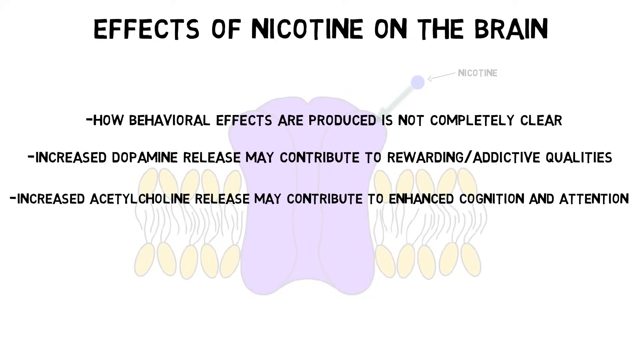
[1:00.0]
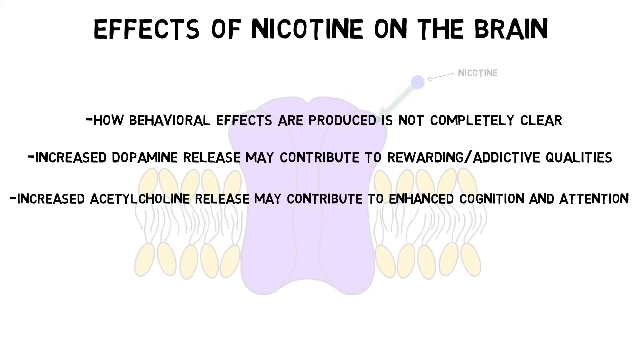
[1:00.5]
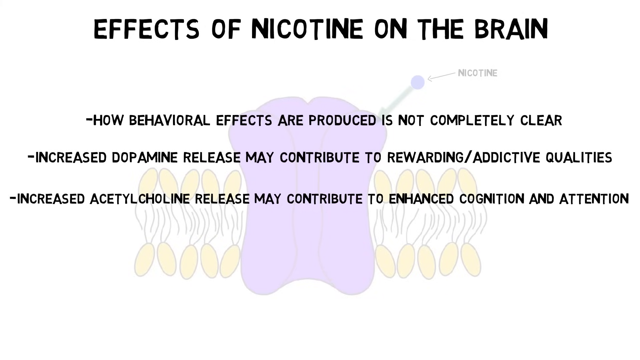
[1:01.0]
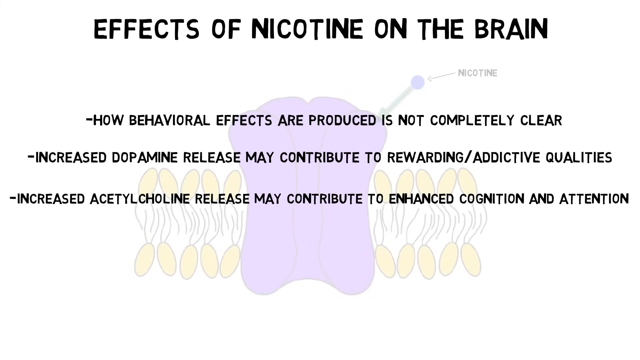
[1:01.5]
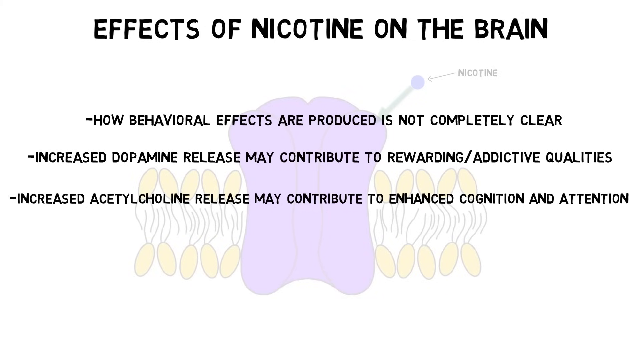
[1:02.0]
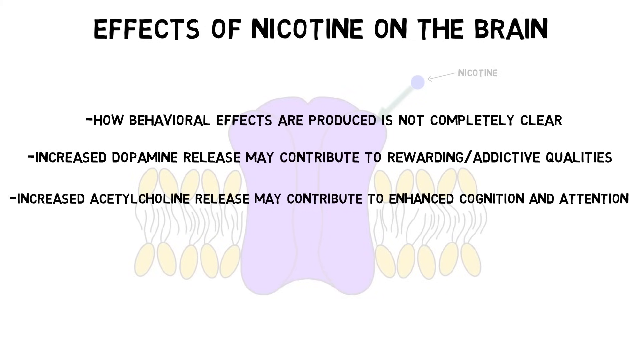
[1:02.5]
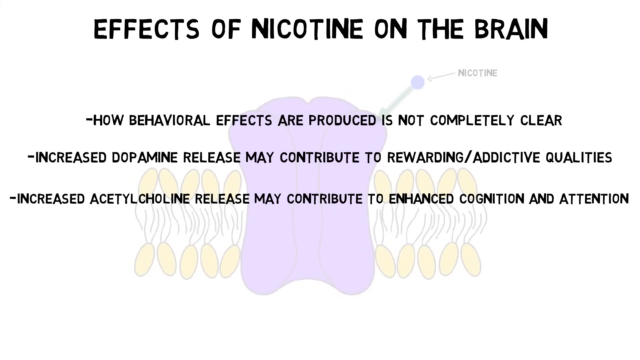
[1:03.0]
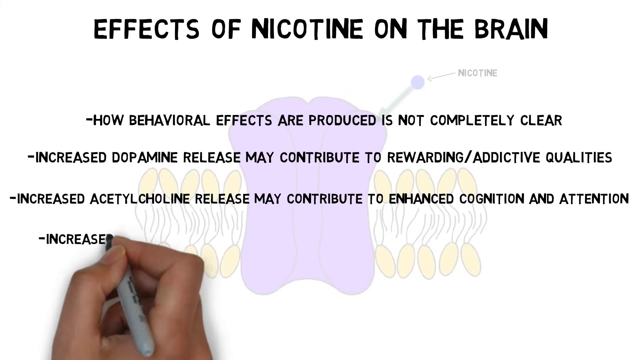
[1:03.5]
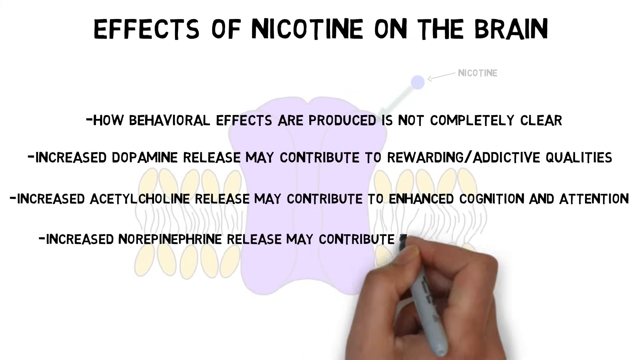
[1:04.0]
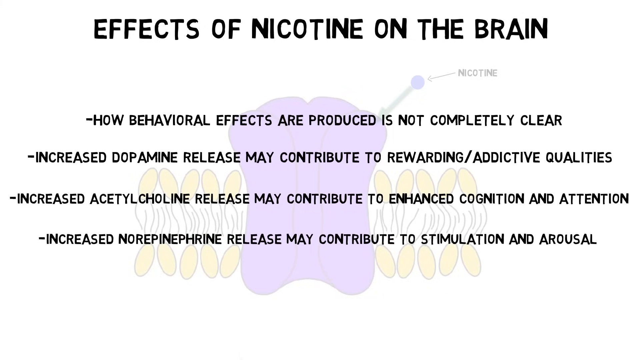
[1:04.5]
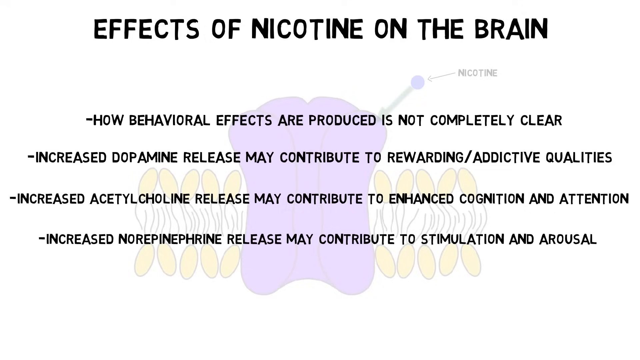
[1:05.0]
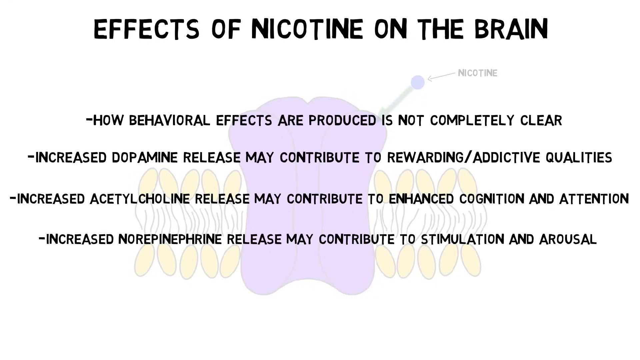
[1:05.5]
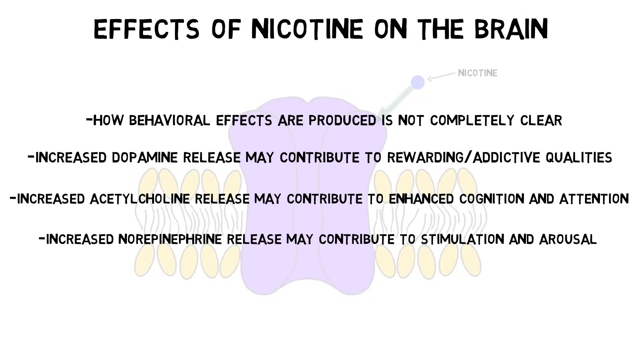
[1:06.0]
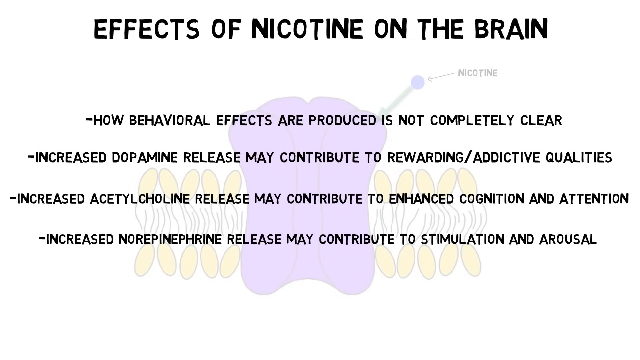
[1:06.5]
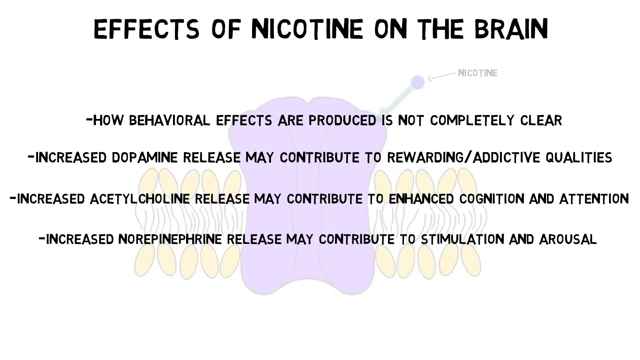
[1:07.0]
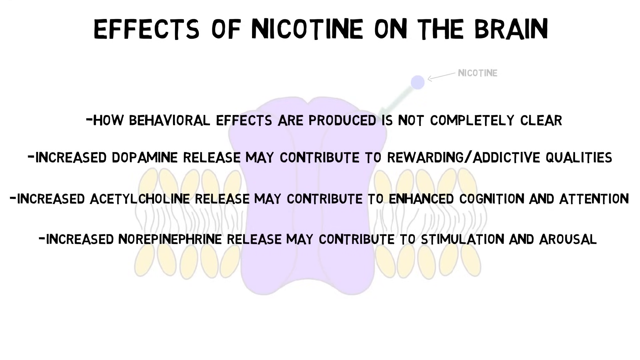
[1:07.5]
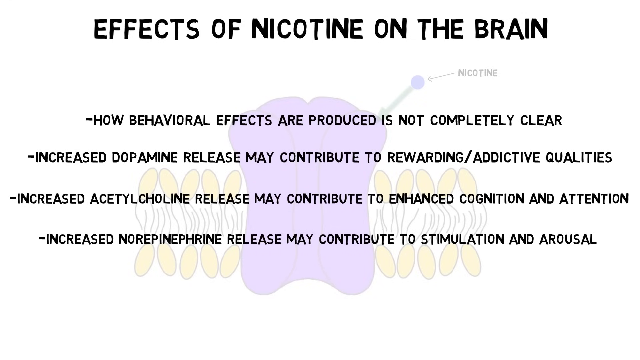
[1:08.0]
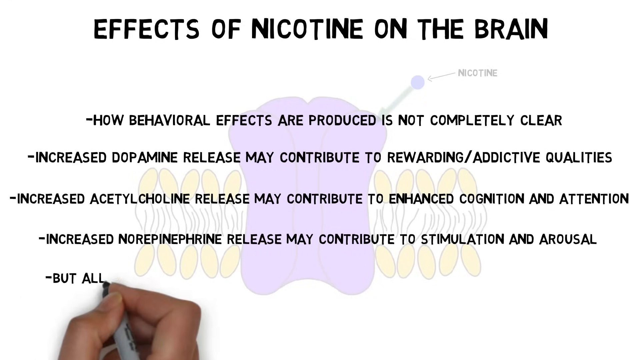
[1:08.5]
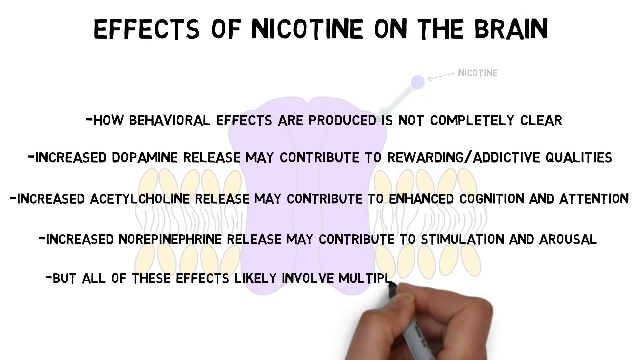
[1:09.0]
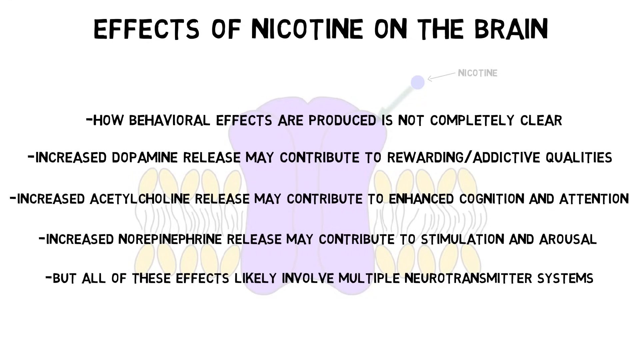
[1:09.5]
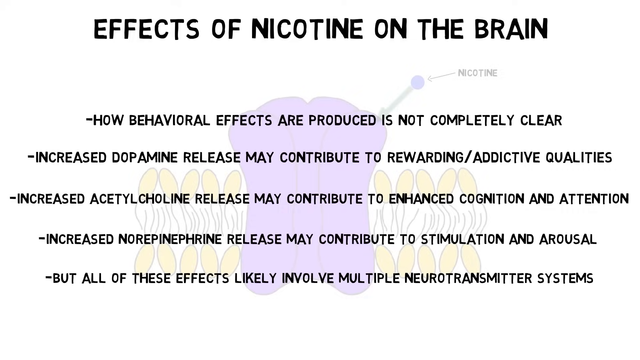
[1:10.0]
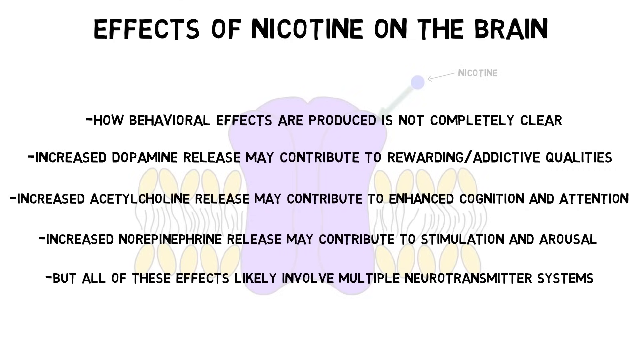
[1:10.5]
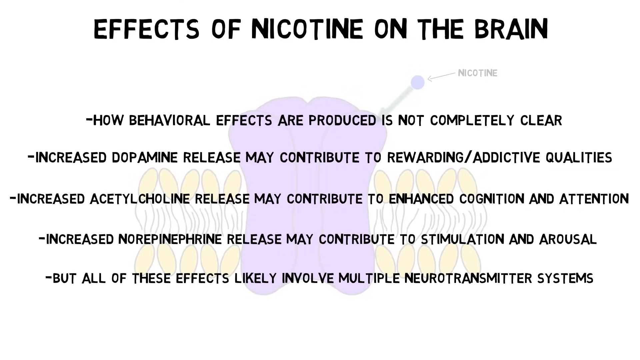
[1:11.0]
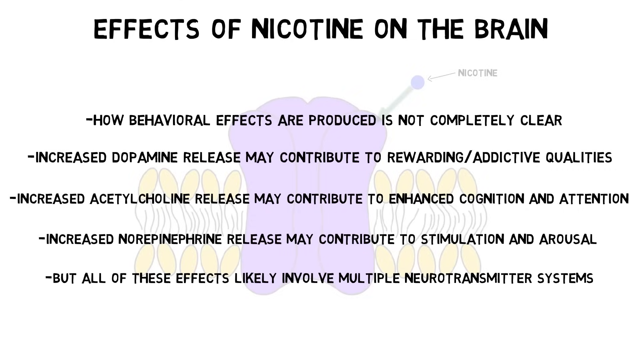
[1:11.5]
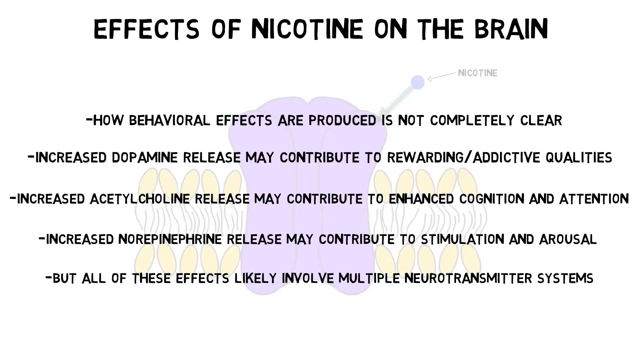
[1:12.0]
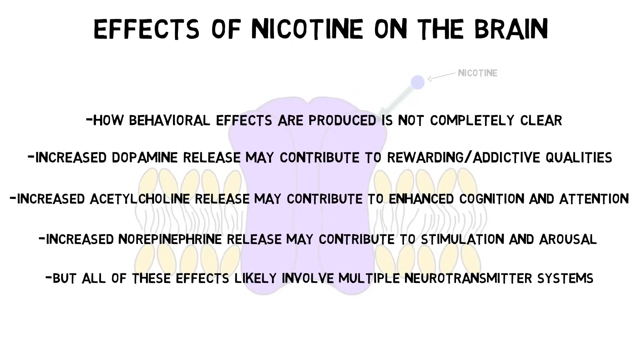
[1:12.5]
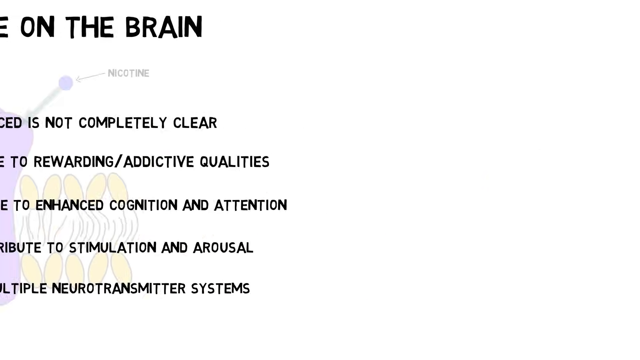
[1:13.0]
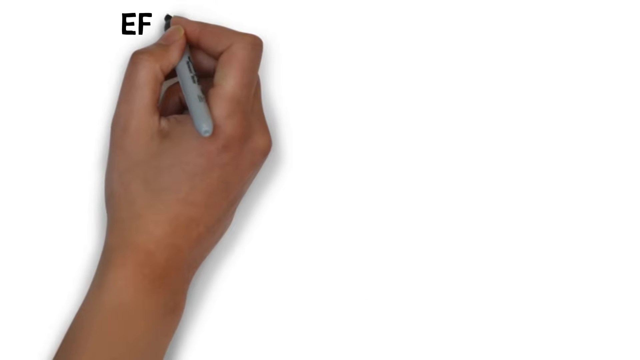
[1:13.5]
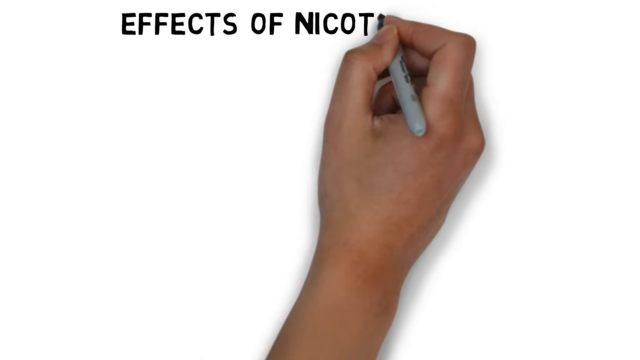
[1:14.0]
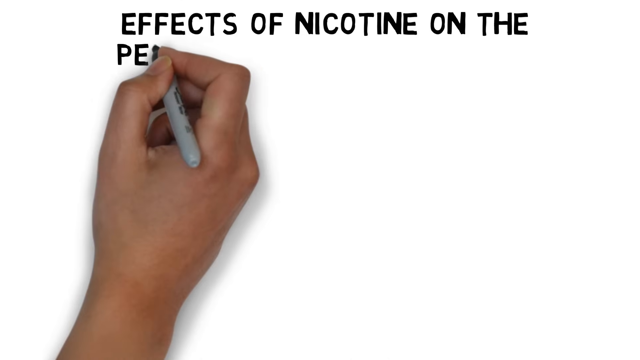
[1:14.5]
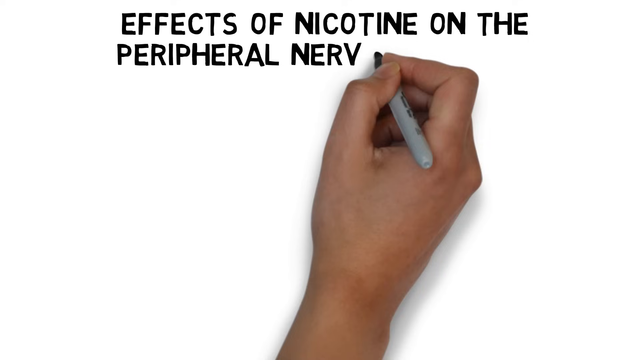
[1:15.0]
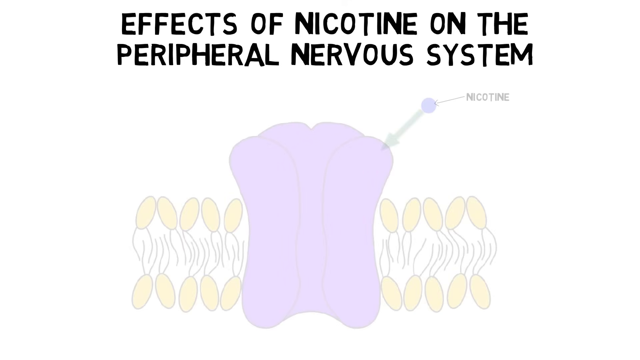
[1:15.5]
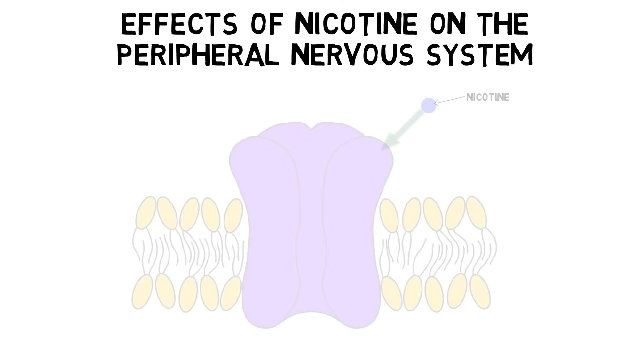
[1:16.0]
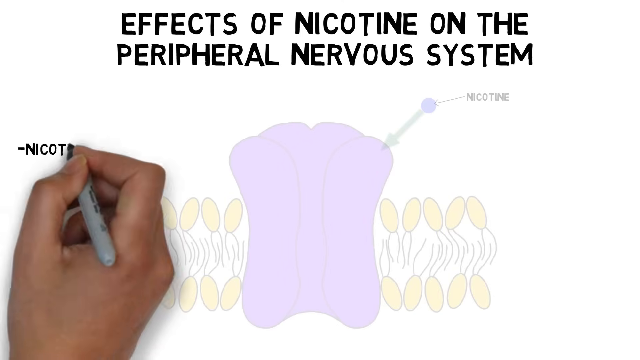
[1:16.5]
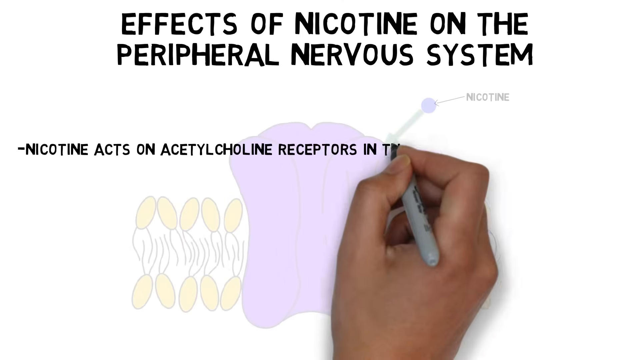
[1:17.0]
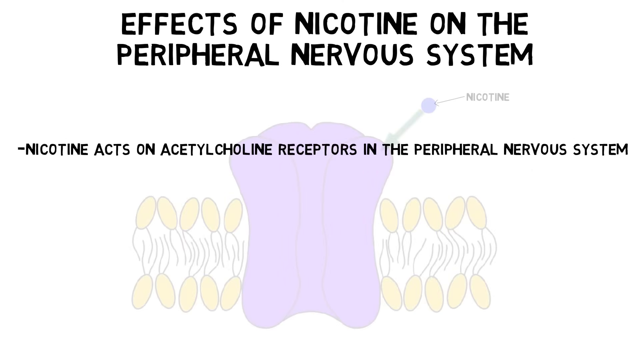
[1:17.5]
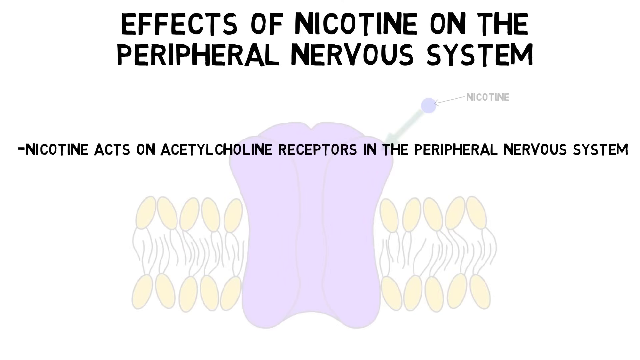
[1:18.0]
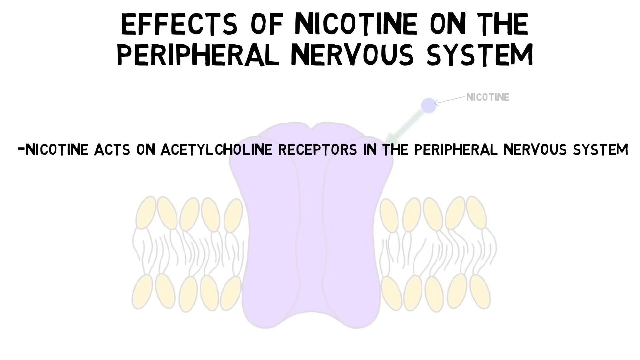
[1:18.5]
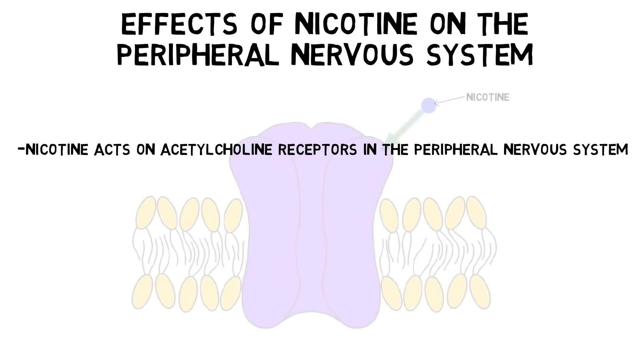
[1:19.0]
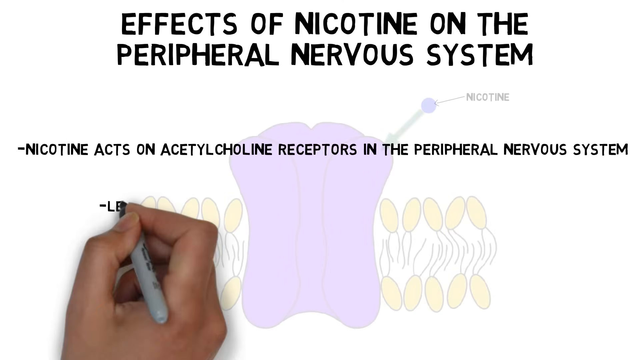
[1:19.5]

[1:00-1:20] A screen titled "effects of nicotine on the brain" appears, with the diagram faded out and used as the background. The hand holding a pen writes a bulleted list of five points in the middle of the screen: "how behavioral effects are produced is not completely clear"; "increased dopamine release may contribute to rewarding/addictive qualities"; "increased acetylcholine release may contribute to enhanced cognition and attention"; a fourth point ending "release may contribute to stimulation and arousal"; and "but all of these effects likely involve multiple neurotransmitter systems". The screen then changes to another screen titled "effects of nicotine on the peripheral nervous system".